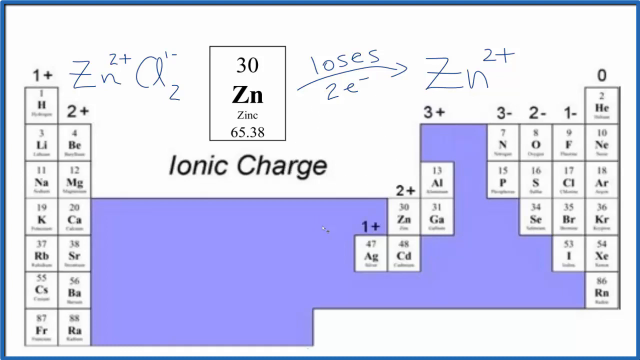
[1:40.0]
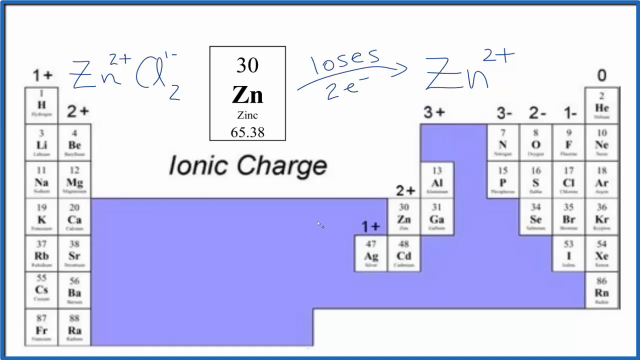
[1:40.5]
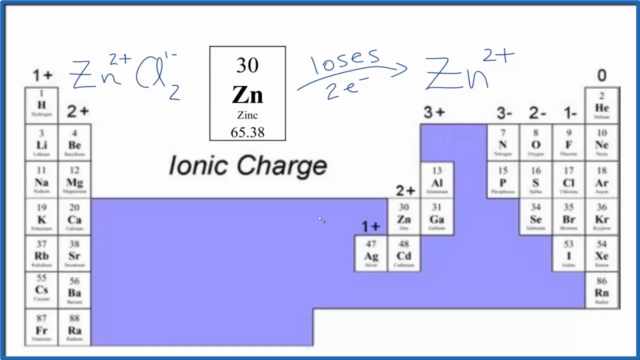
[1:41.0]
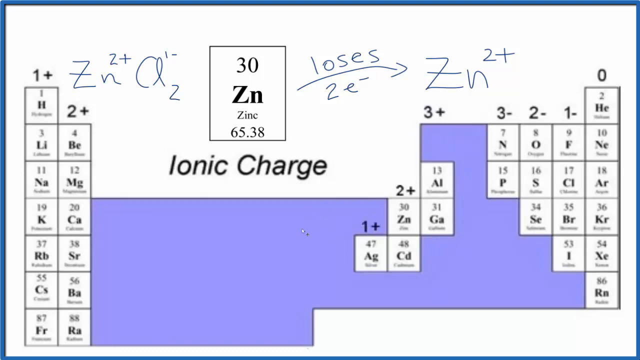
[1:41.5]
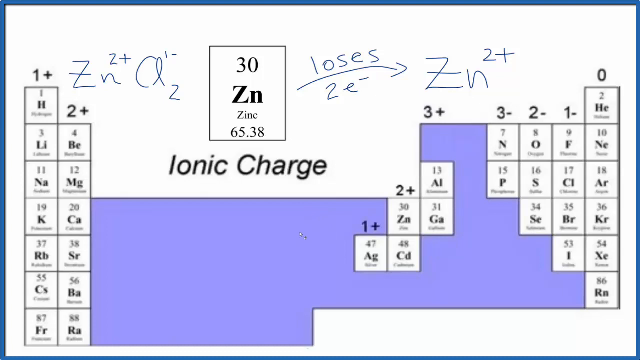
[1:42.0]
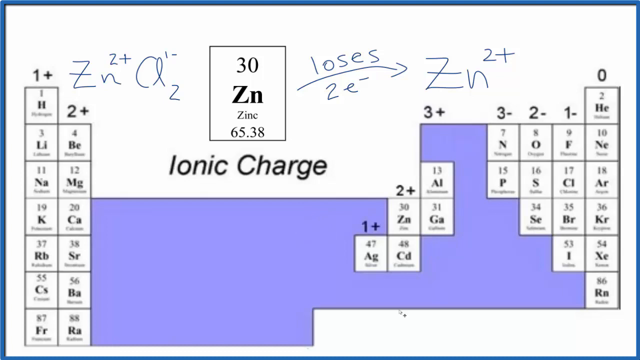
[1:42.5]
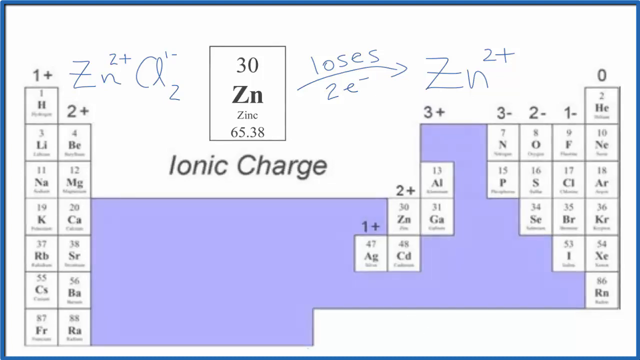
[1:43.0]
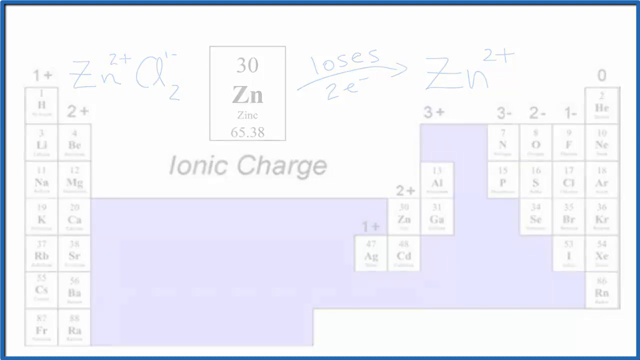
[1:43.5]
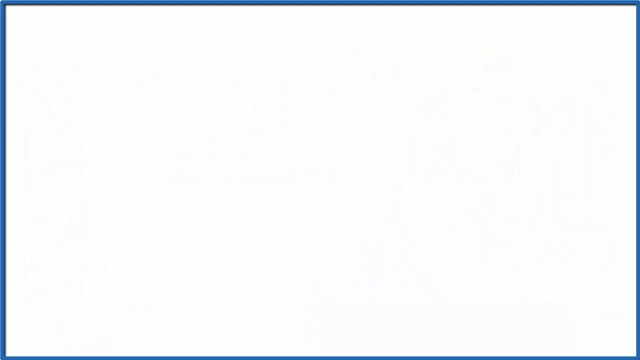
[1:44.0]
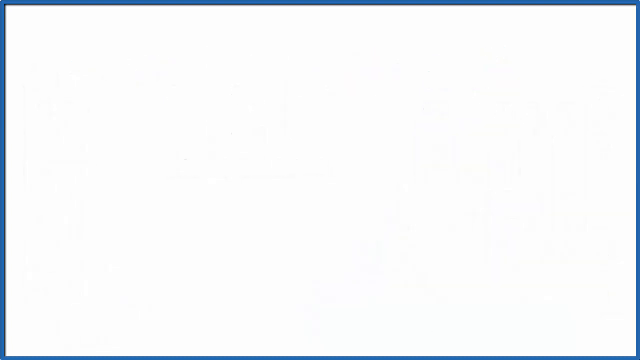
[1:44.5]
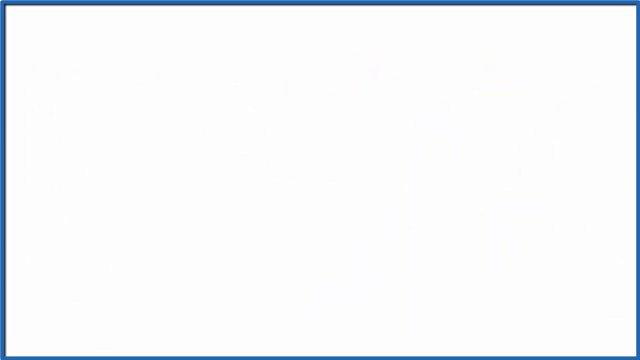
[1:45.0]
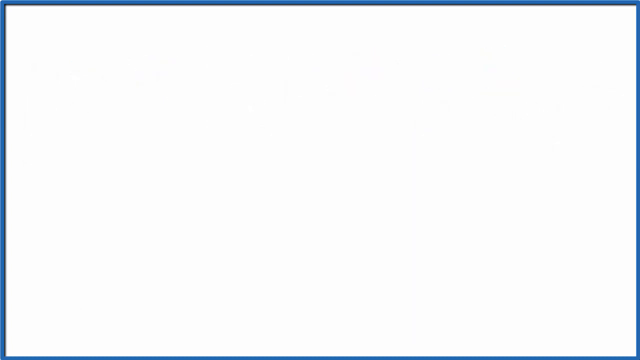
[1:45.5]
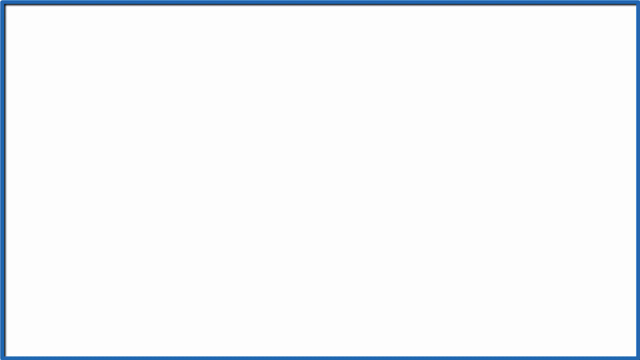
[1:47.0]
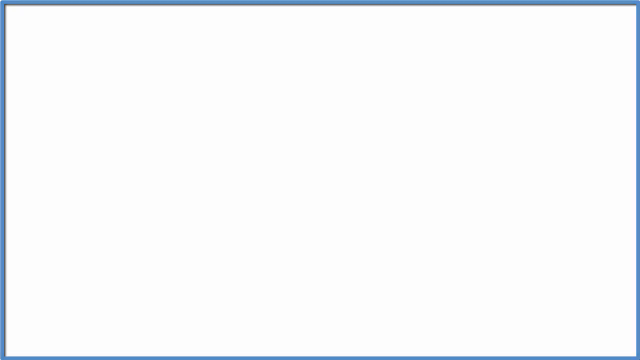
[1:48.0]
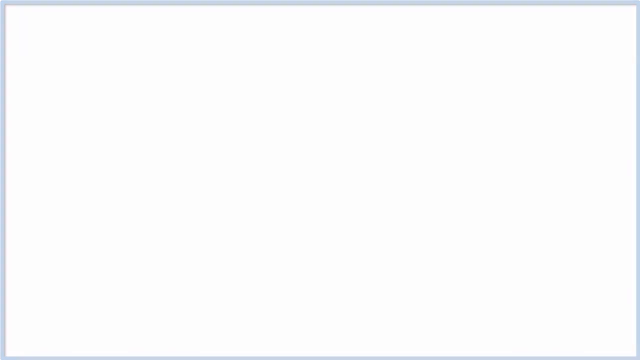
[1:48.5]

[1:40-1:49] For the remainder of the video the screen does not change. It shows something like a periodic table, with a zoomed-in view of one section: columns on the left-hand side and a smaller set of columns to their right, with blue gaps in between and a stairs effect in the center. On the left-hand side are four rows of boxes, and above them is the title "Ionic Charge". In the top section of the screen, on a white background, handwritten words say "ZN2+ A1/2". The original box, which was highlighted in blue, is shown in a bigger font in the center of the screen, and to the right of it is the "losses" arrow with "2E/ ZN2+".